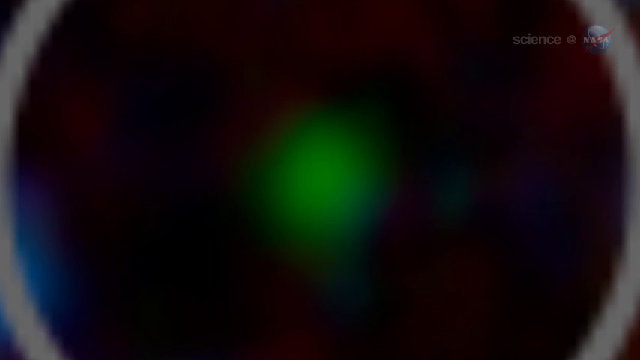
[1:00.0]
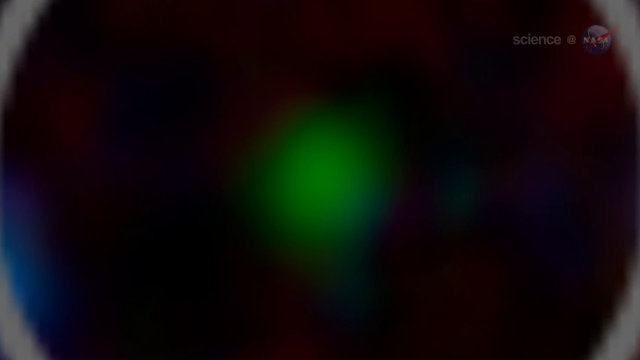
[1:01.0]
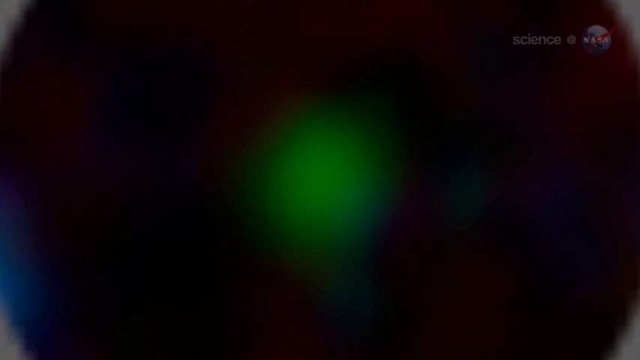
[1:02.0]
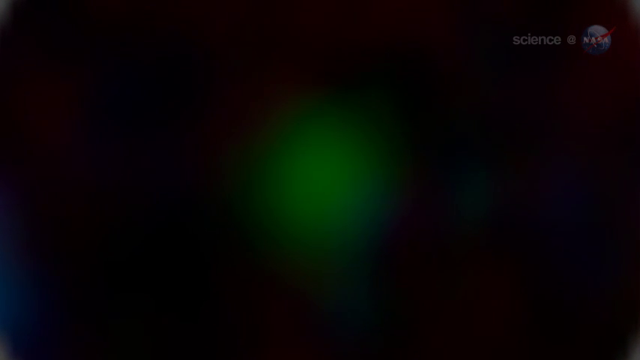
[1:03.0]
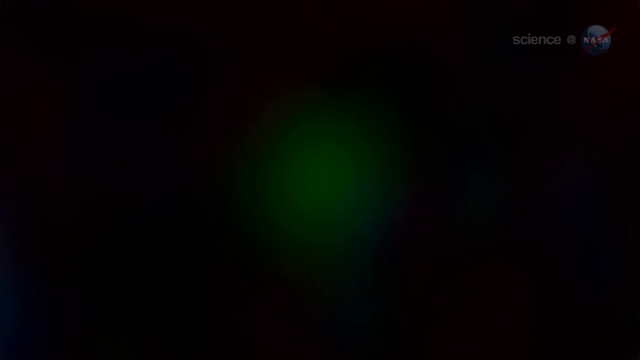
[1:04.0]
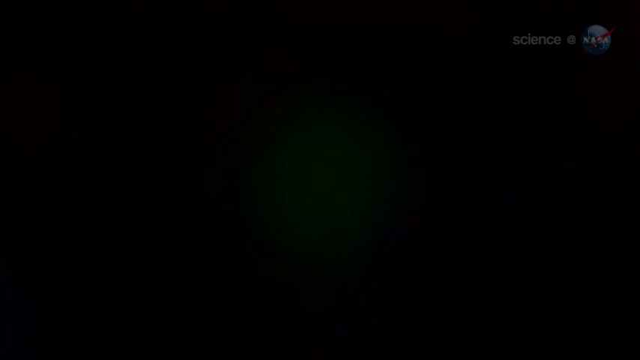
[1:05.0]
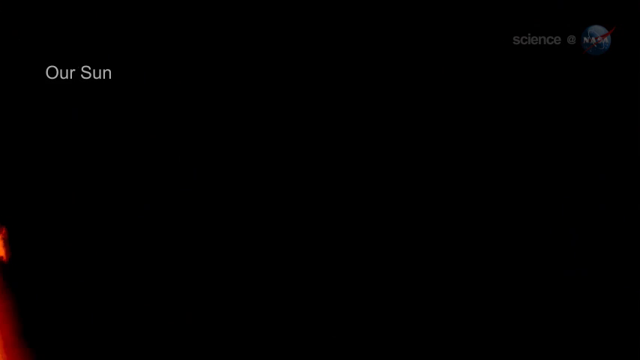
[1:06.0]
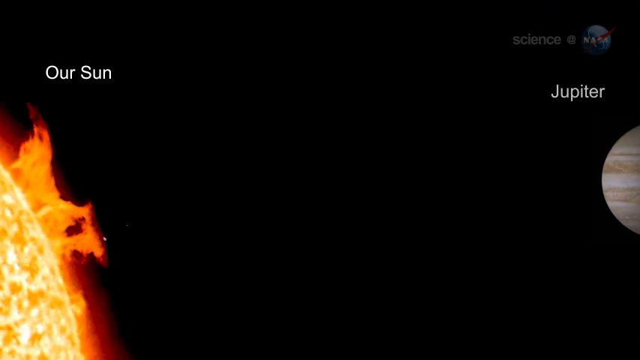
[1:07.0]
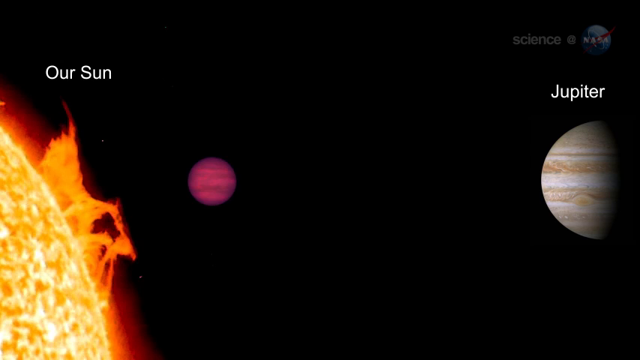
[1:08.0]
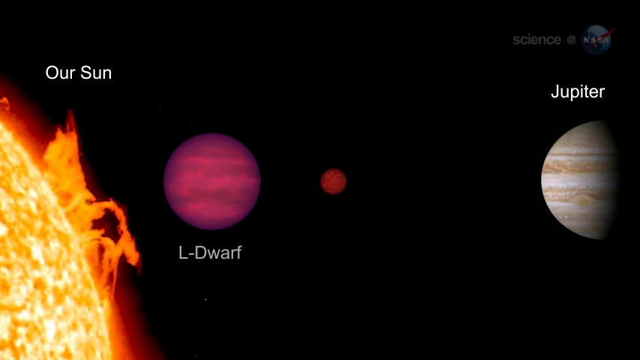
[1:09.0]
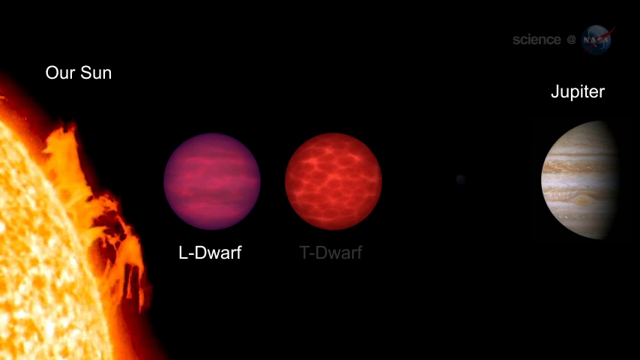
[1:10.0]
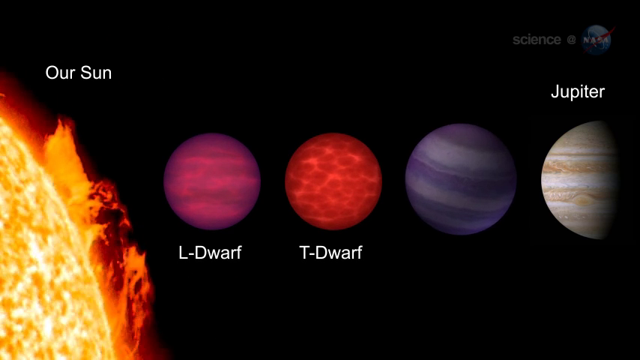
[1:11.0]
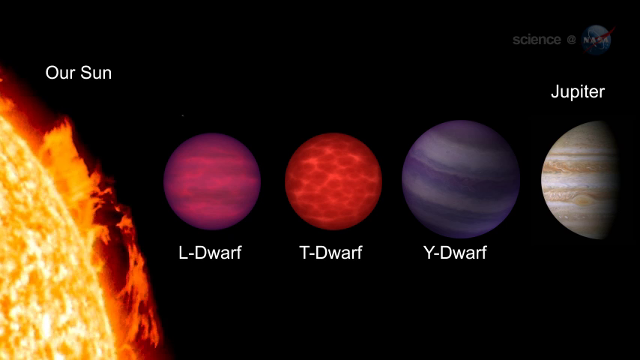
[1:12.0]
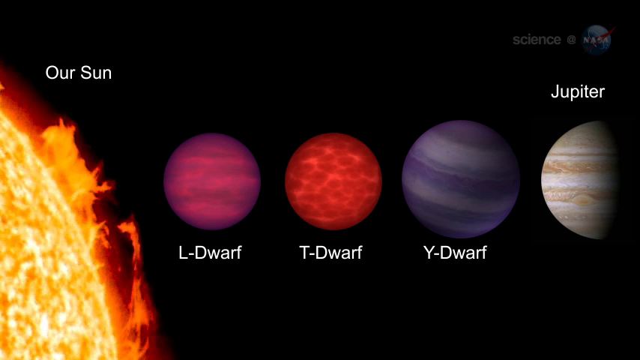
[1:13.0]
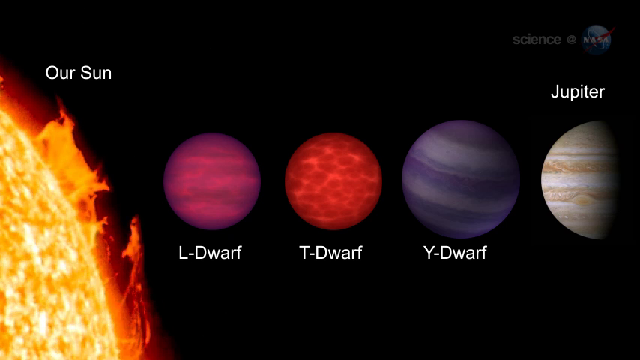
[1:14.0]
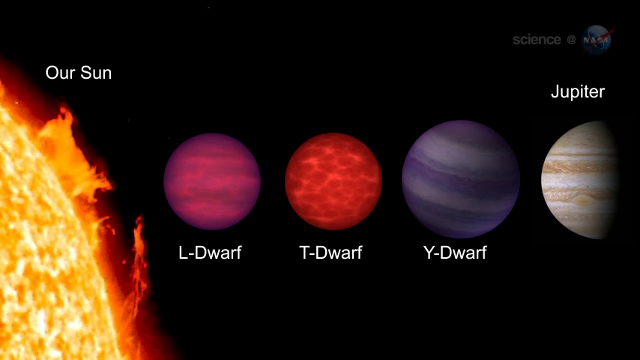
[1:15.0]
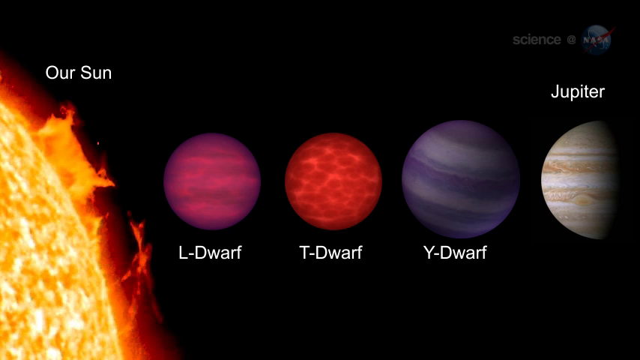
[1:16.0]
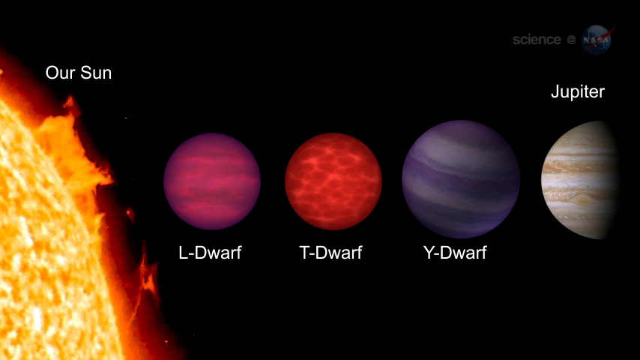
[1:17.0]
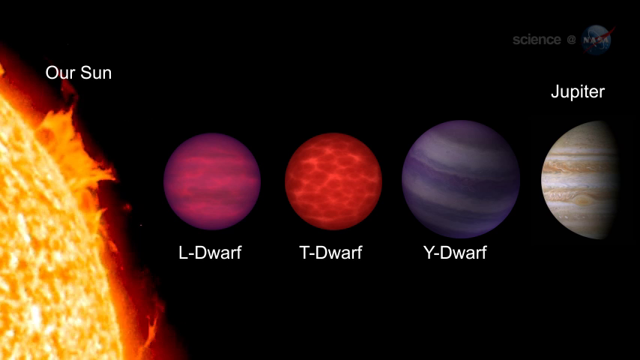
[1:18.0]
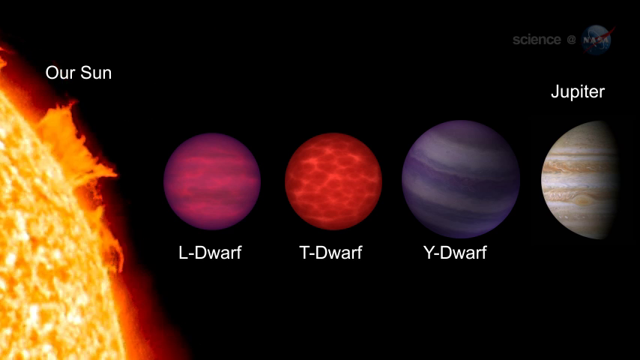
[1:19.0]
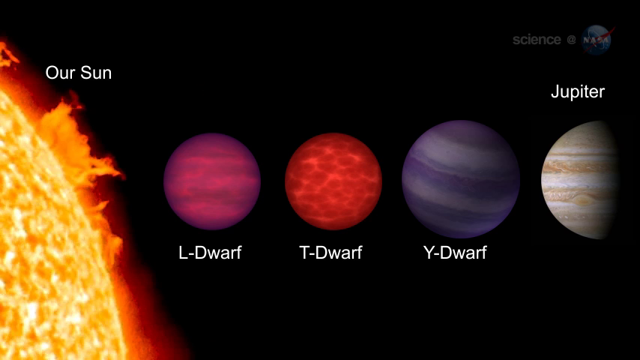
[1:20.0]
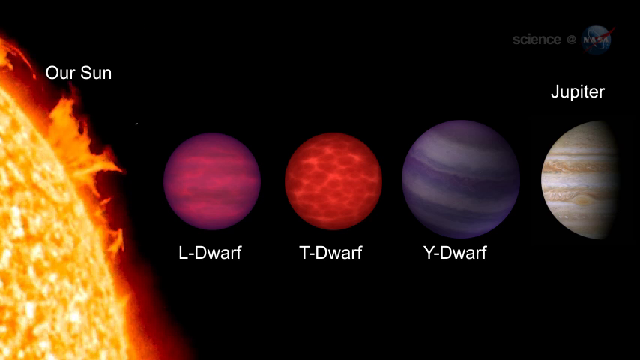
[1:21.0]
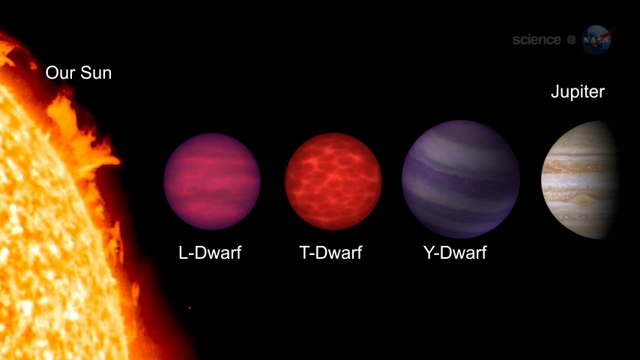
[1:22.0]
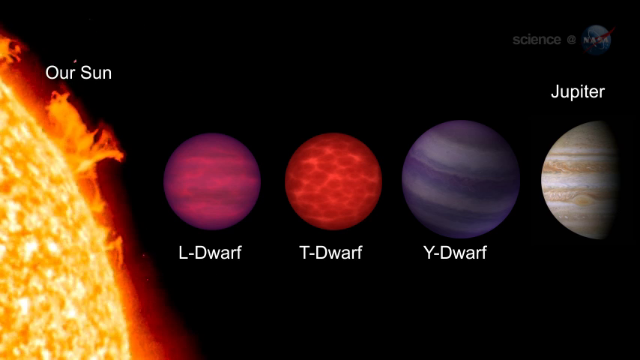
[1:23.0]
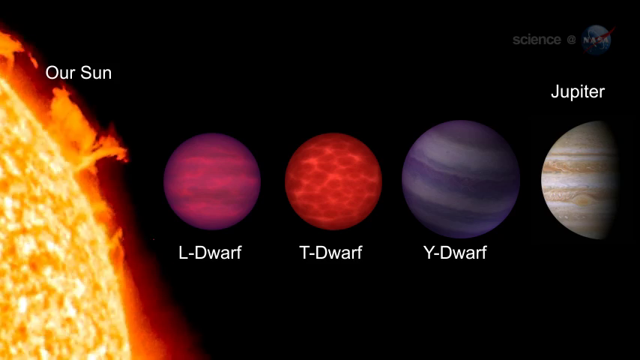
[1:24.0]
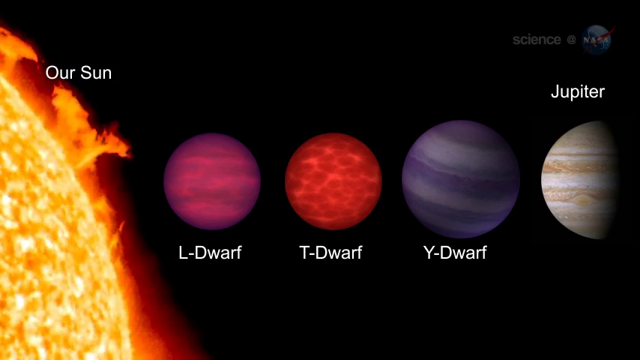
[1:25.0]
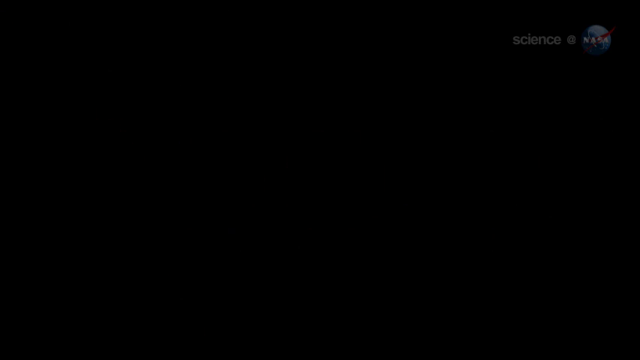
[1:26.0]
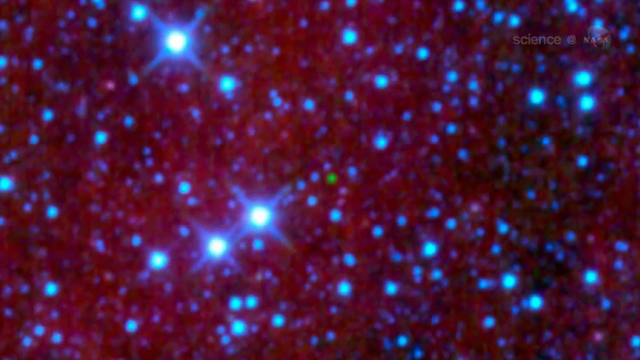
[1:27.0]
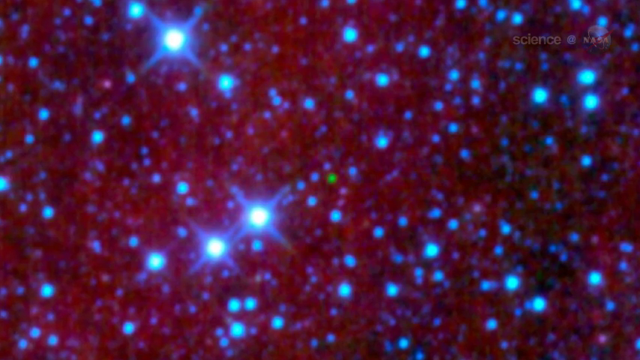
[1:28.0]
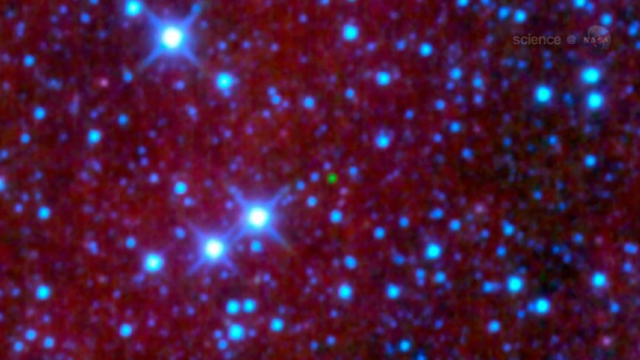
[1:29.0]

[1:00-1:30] The camera zooms closer and closer in on the blue star until the image is almost unrecognizable and completely blurry, then fades to black. It cuts to an image labeled "our sun" and Jupiter, where the planets and stars appear one by one on the screen. The Sun labeled "our sun" glows and shoots out lava jumping up from it. The L-dwarf is red, and the D-dwarf is red as well. The Y-dwarf looks striped with dark gray and light gray, and Jupiter looks like the color of stone. One is all the way to the left next to the Sun; to the right of it is the D-dwarf, to the right of that the Y-dwarf, and to the right of that Jupiter. The image fades to black and cuts to another shot of blue stars on a red background.